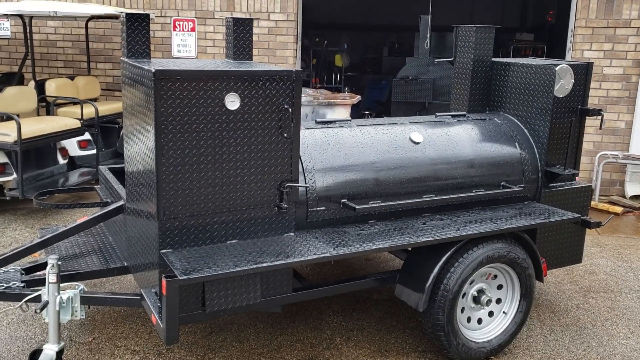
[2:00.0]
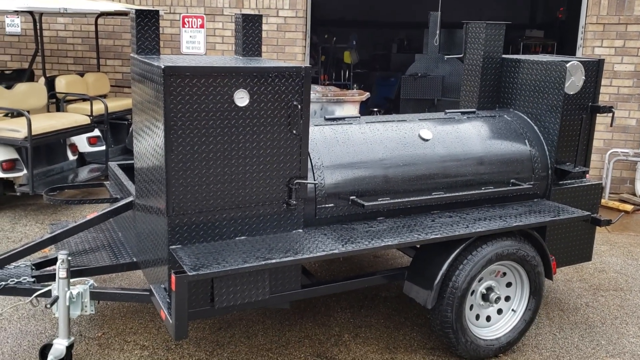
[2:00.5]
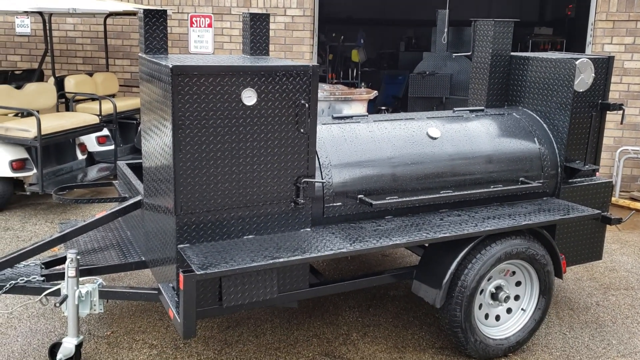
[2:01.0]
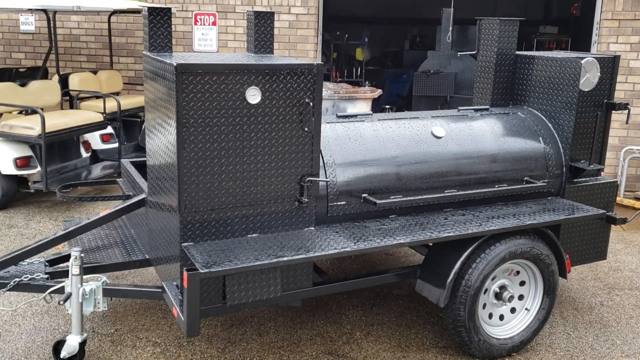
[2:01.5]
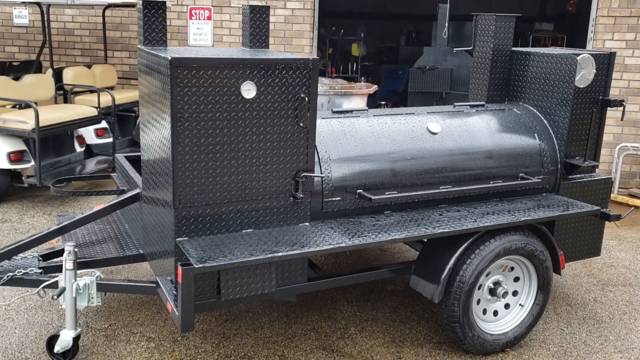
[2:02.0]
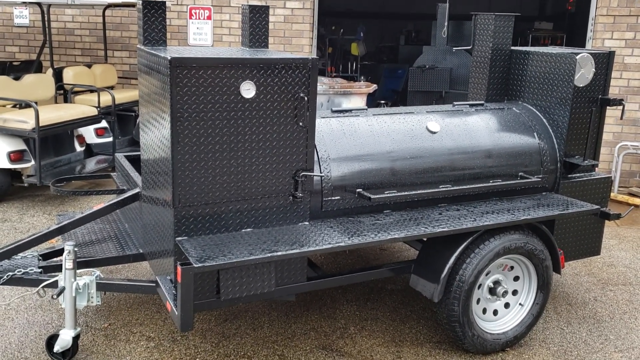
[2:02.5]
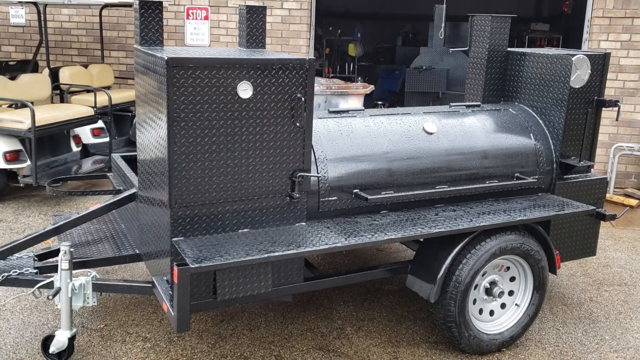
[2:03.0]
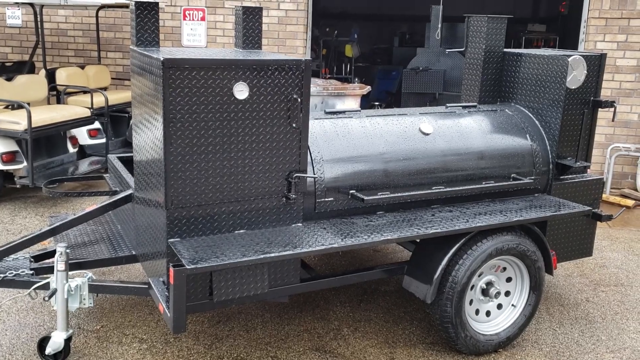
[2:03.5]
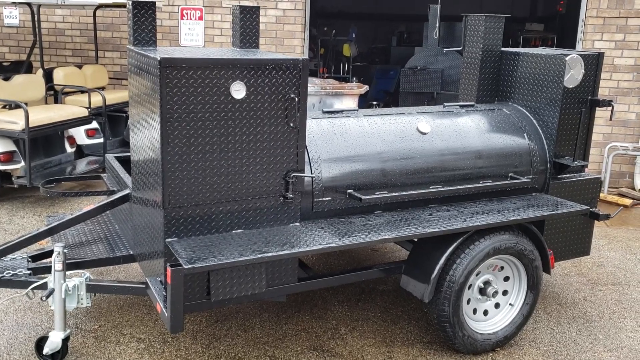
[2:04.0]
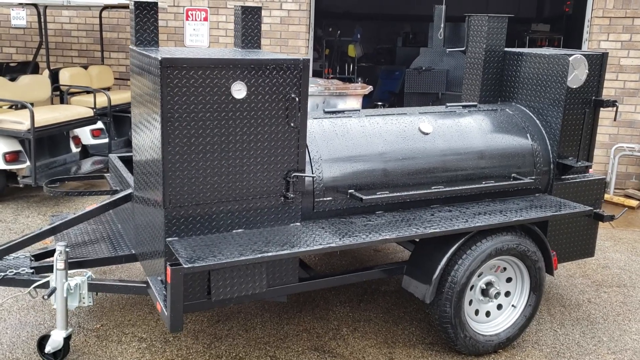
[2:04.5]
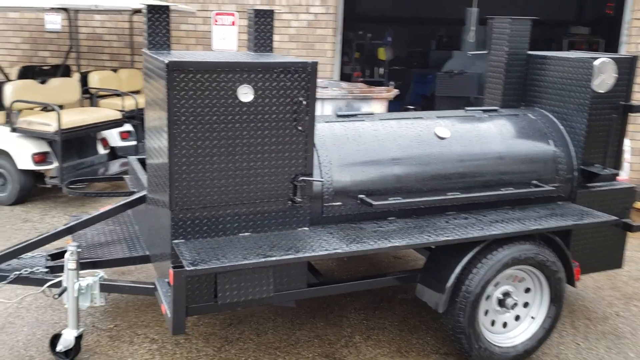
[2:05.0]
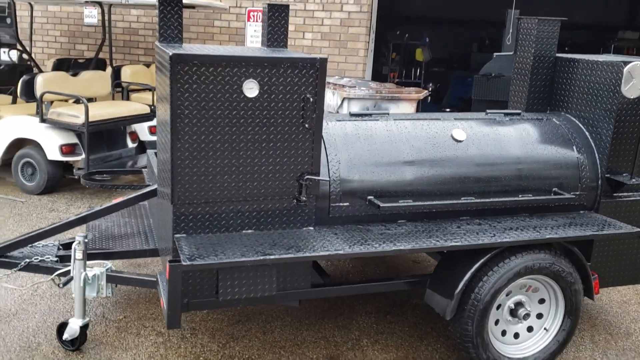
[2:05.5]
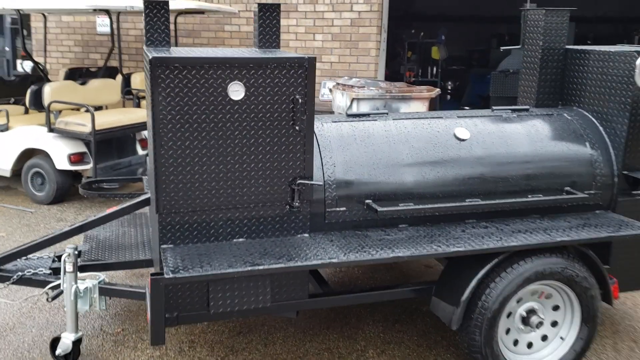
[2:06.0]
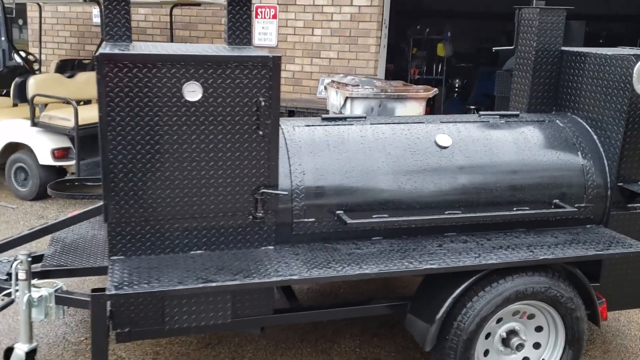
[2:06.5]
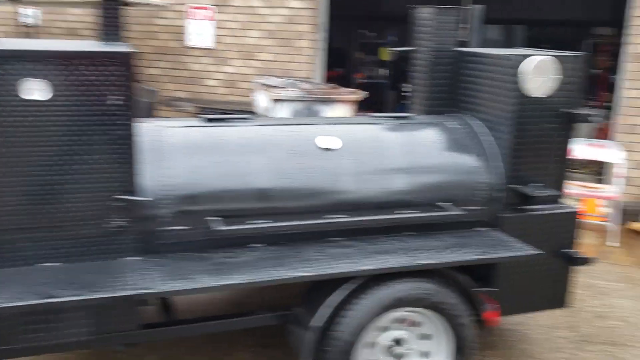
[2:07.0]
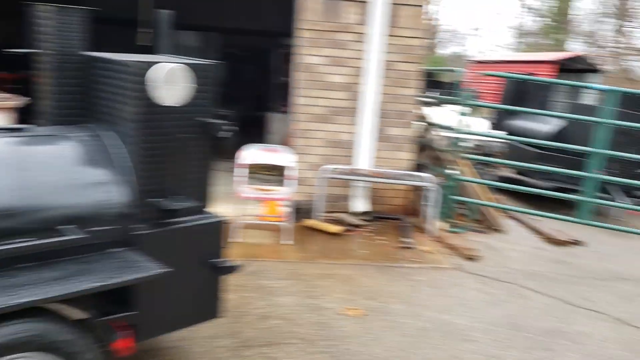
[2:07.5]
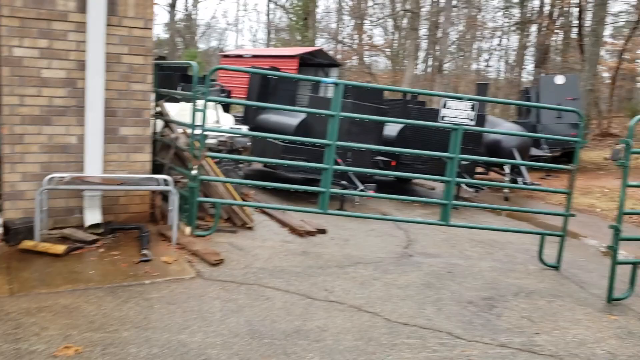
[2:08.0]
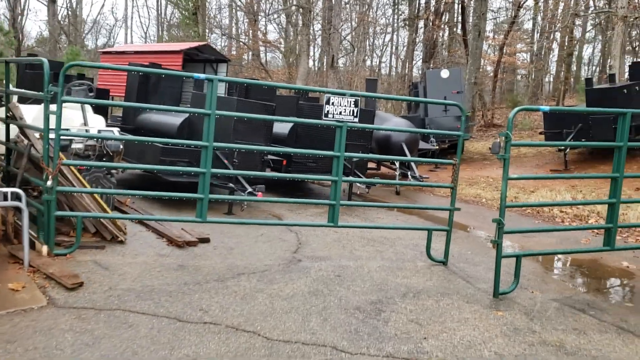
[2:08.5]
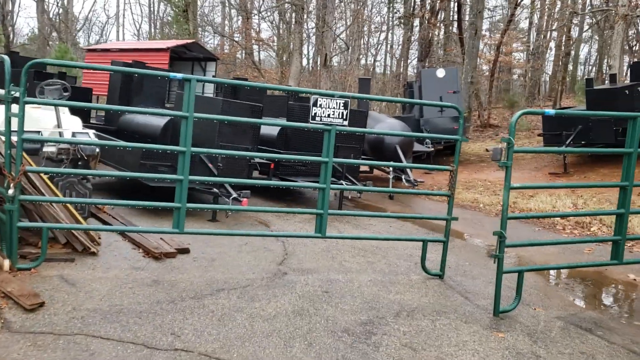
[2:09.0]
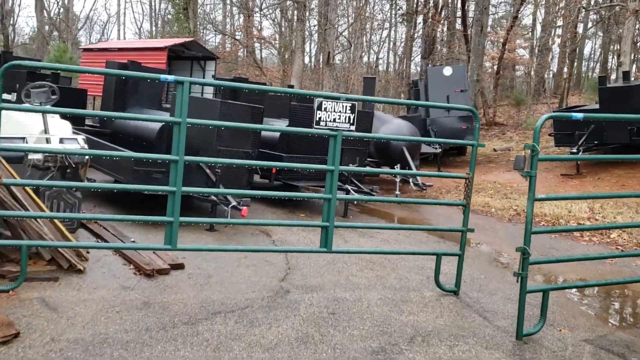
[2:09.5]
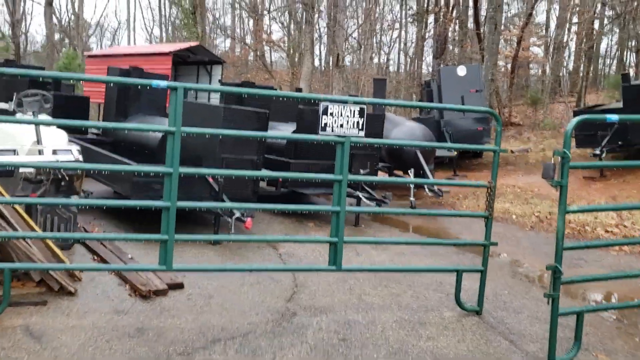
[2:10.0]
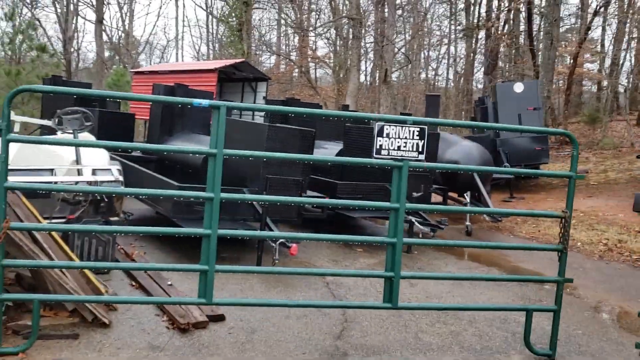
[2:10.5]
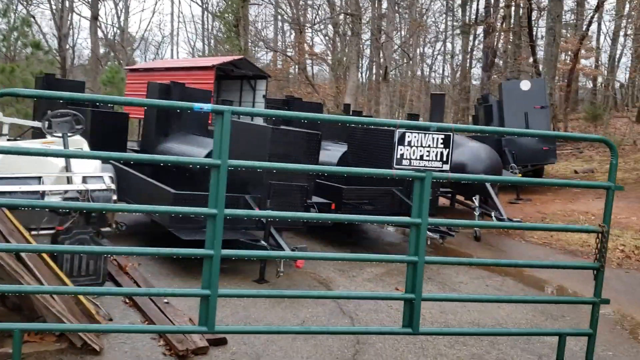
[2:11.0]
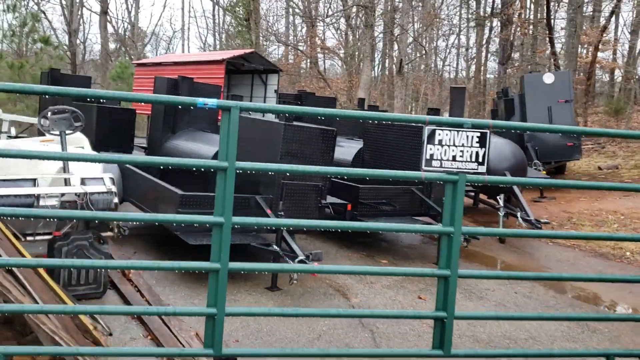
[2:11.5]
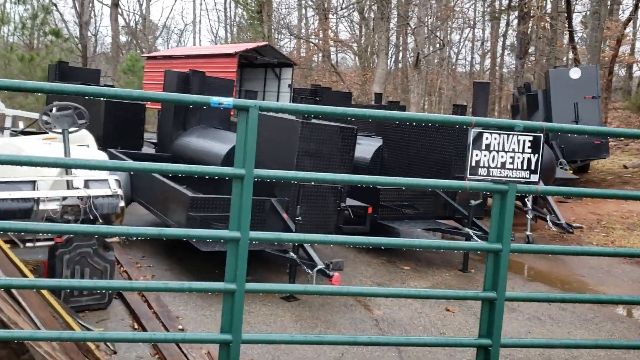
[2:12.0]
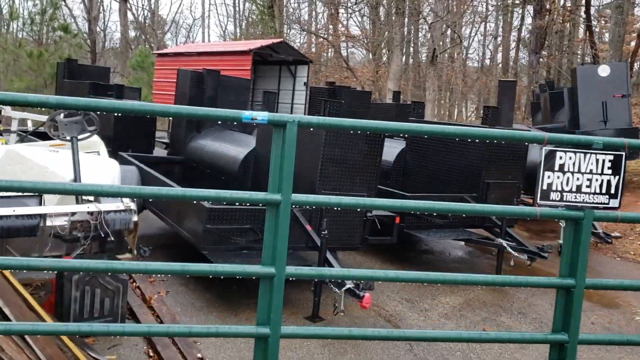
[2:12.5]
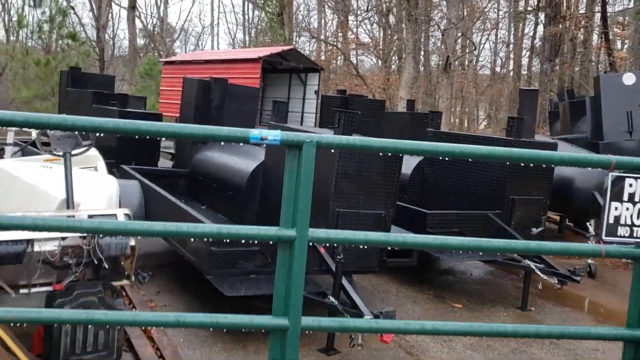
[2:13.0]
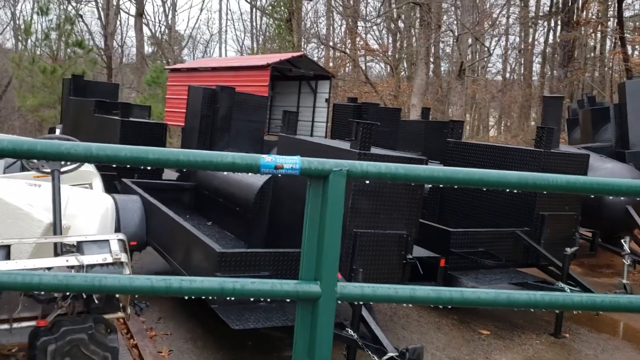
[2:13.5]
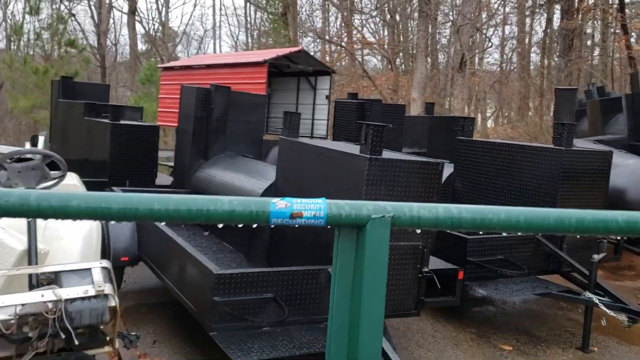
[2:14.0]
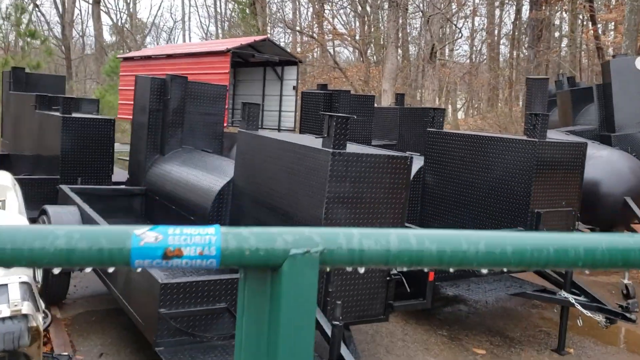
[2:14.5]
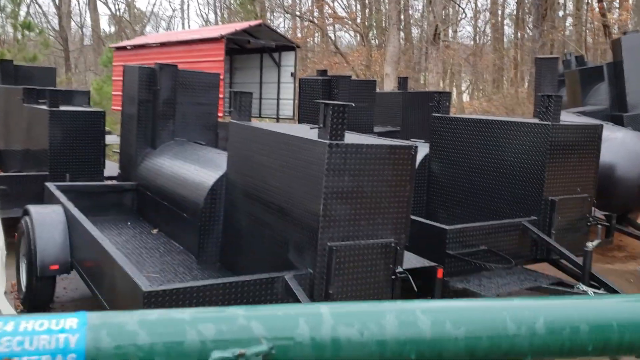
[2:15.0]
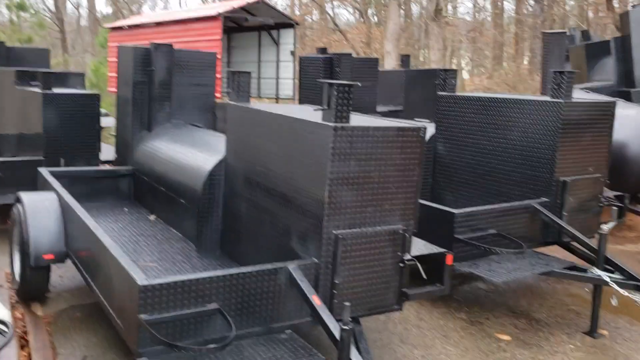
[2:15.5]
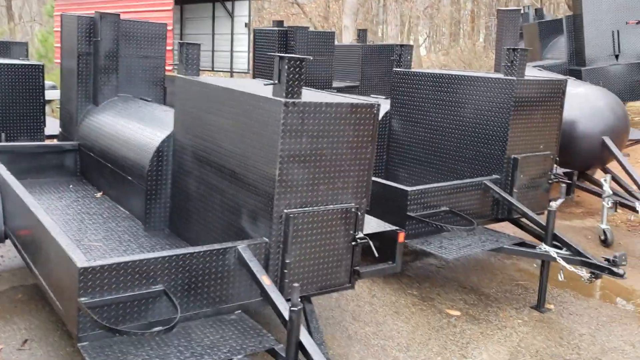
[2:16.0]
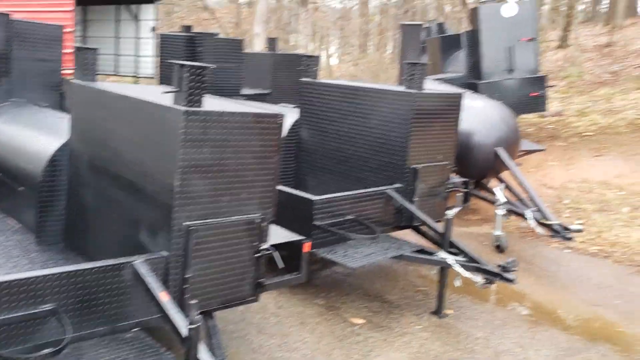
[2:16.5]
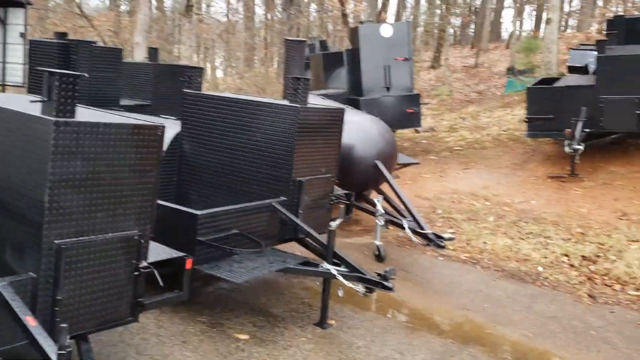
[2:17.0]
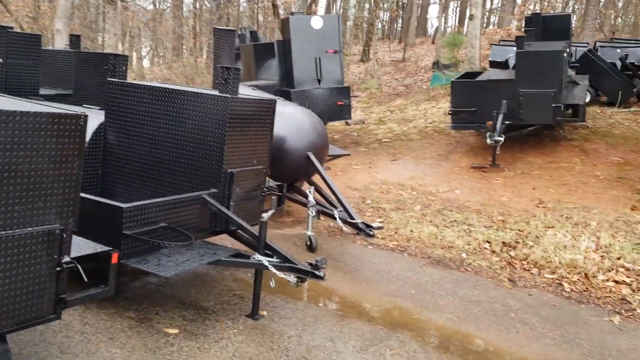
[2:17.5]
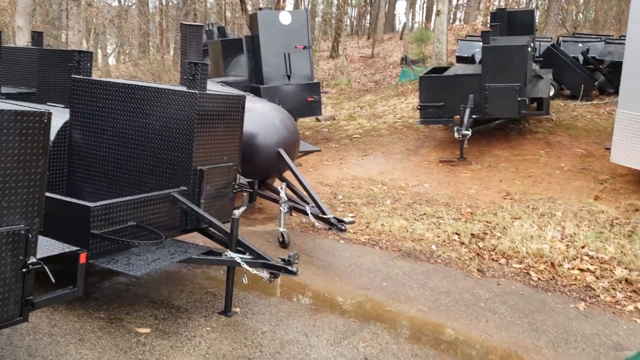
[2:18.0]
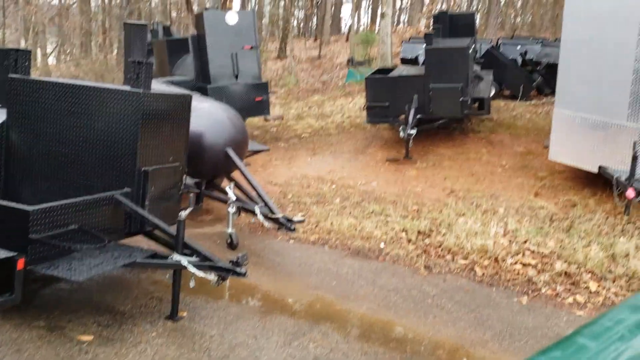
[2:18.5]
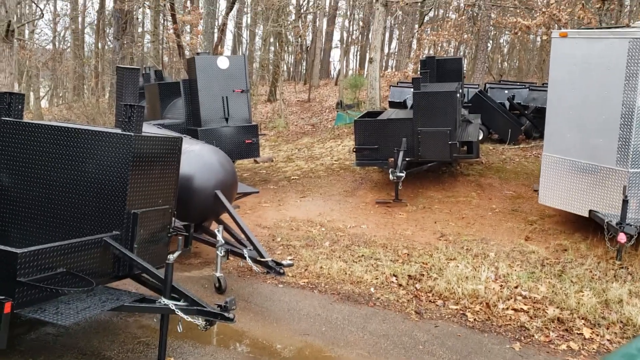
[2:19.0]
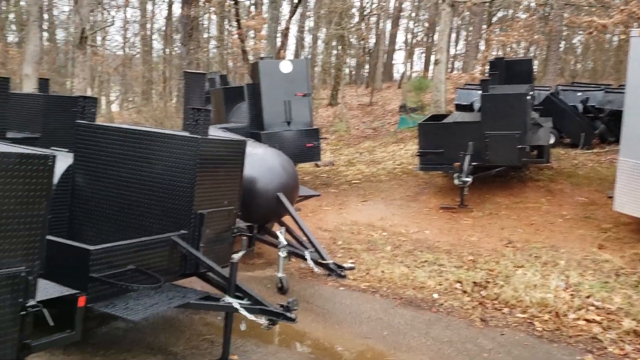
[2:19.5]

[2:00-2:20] The trailer stands still, the dustbin is still there, and the golf cars still stand still while a car passes on the road. At the back or side of the storeroom there are many other black trailers that look the same as the trailer in front of the storeroom, also with the braai stand. A freezer or cooler stands at the same spot as these braai stands. A broken table is on the side of the storeroom. The two golf cars with two white seats and red lights are still standing. At the back there are big trees, a green gate, wood and a red house. The place is still wet, and water droplets are still on top of the trailer.